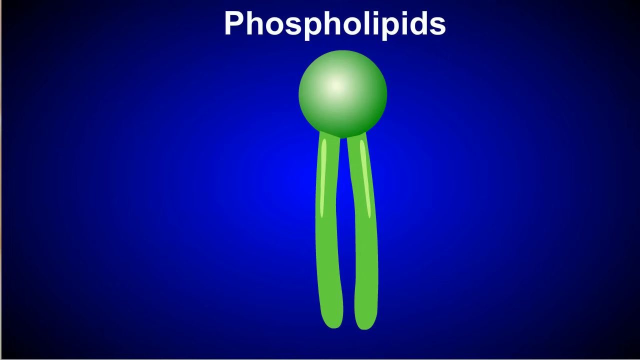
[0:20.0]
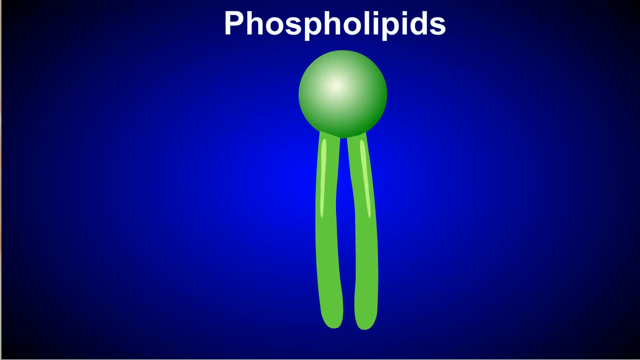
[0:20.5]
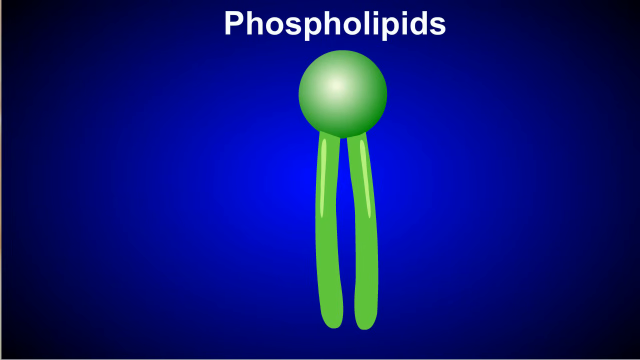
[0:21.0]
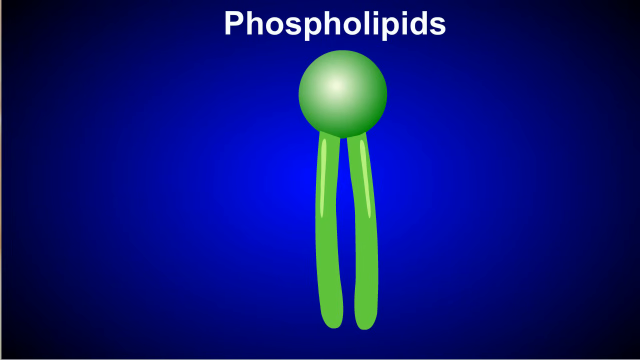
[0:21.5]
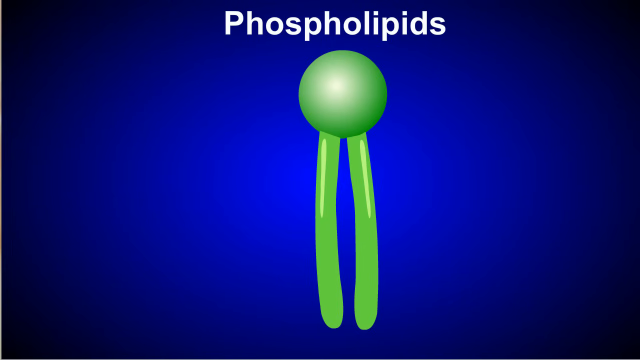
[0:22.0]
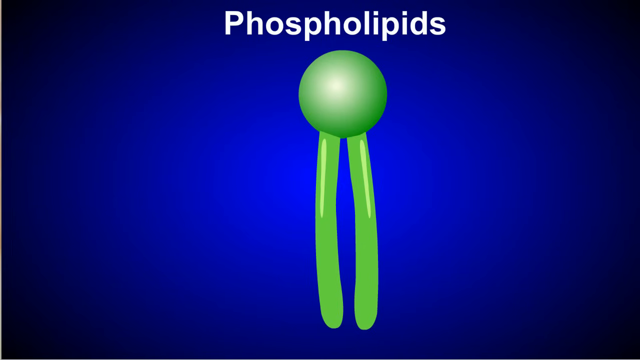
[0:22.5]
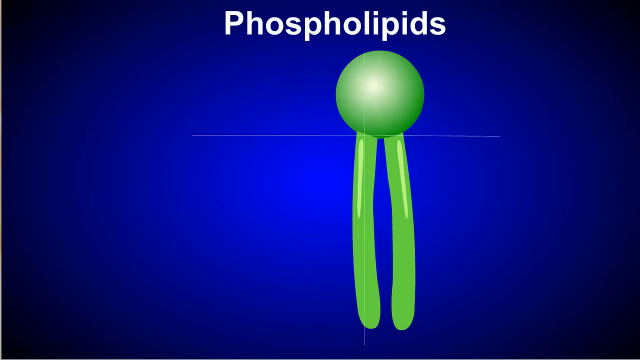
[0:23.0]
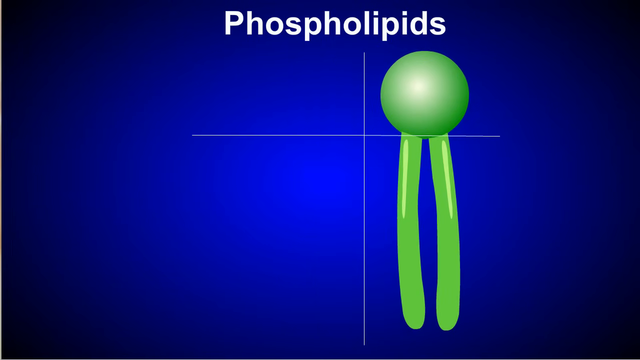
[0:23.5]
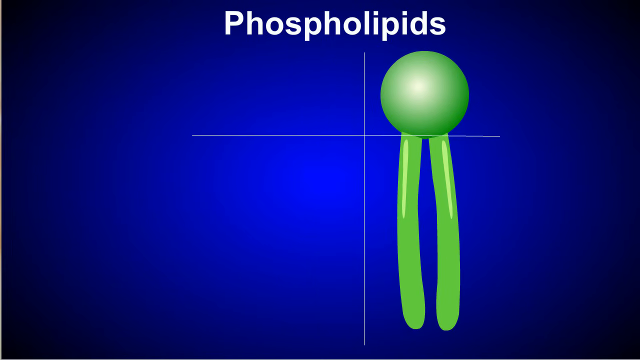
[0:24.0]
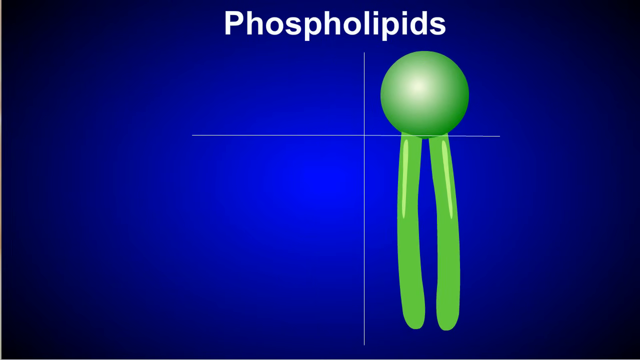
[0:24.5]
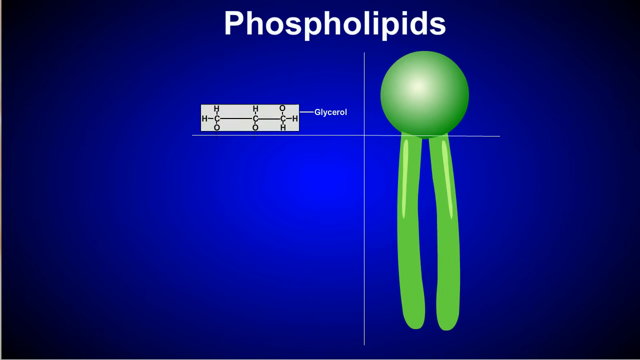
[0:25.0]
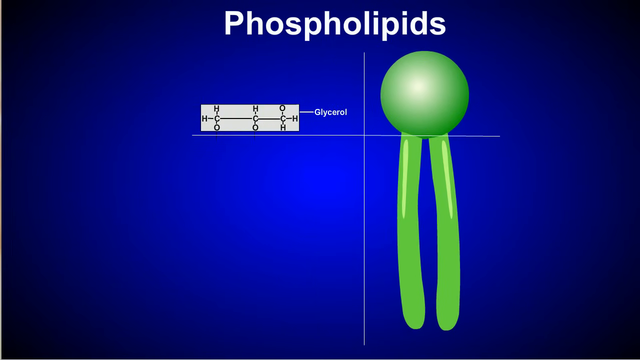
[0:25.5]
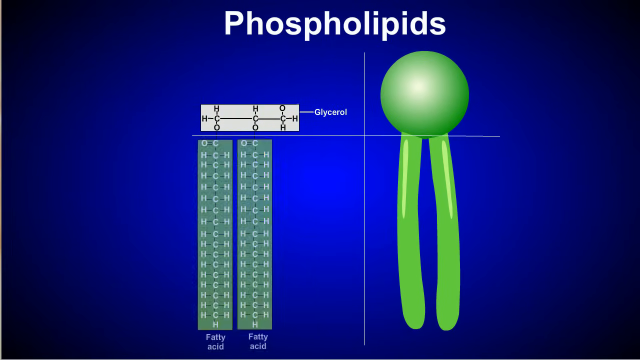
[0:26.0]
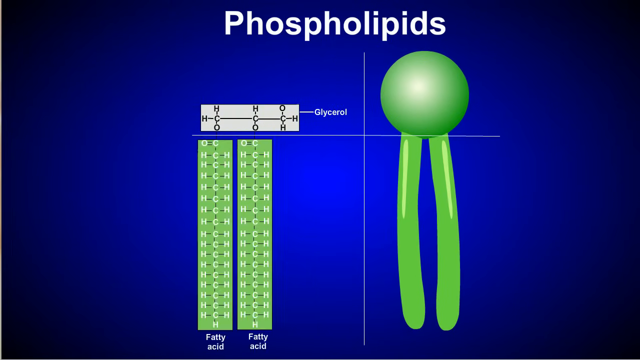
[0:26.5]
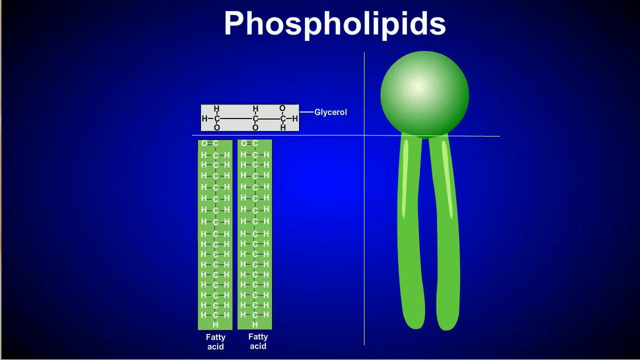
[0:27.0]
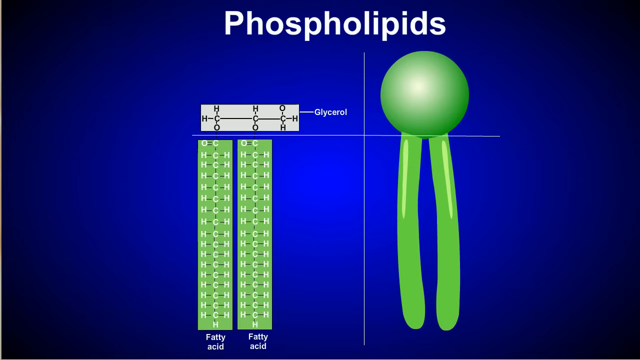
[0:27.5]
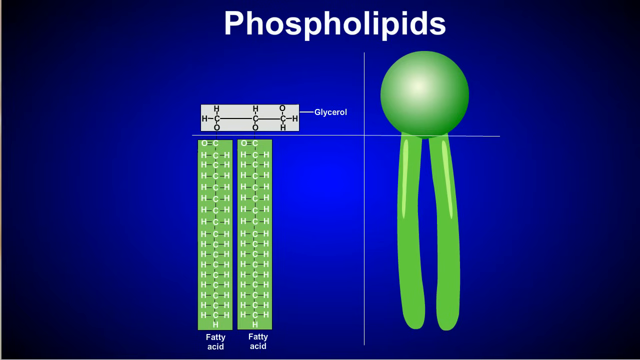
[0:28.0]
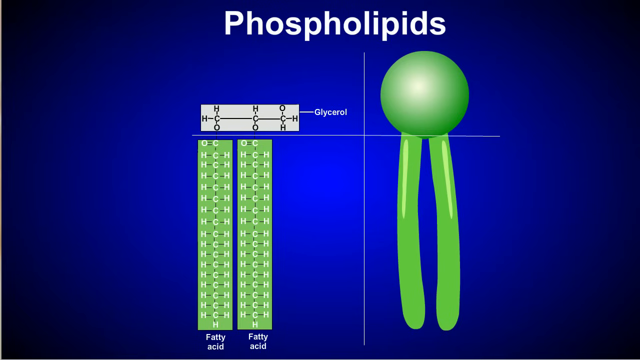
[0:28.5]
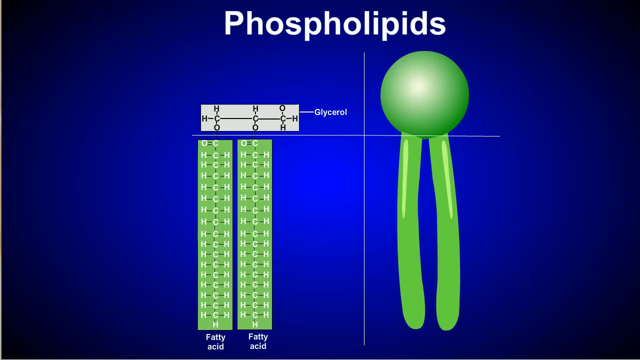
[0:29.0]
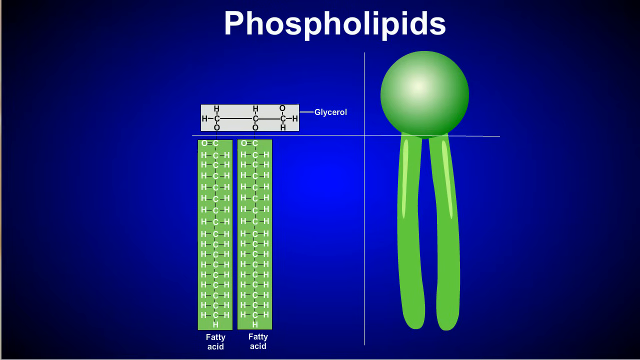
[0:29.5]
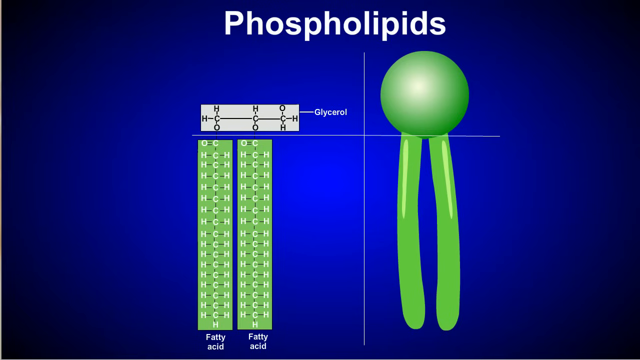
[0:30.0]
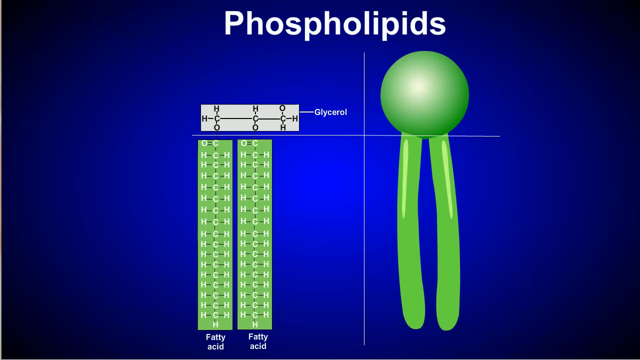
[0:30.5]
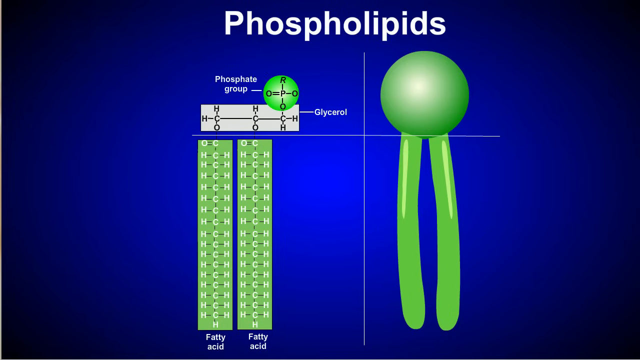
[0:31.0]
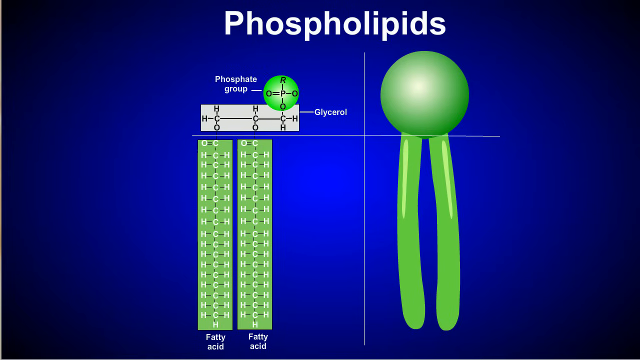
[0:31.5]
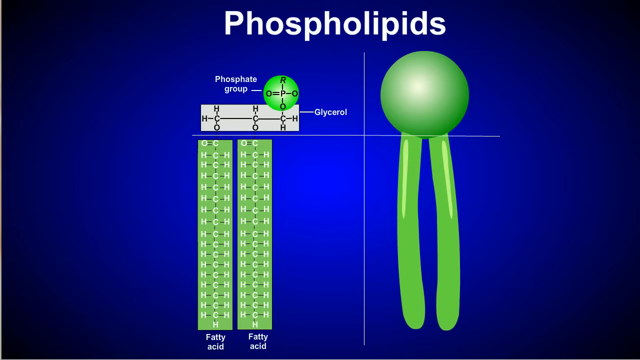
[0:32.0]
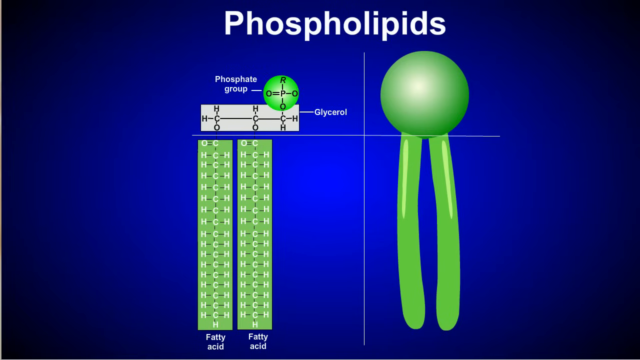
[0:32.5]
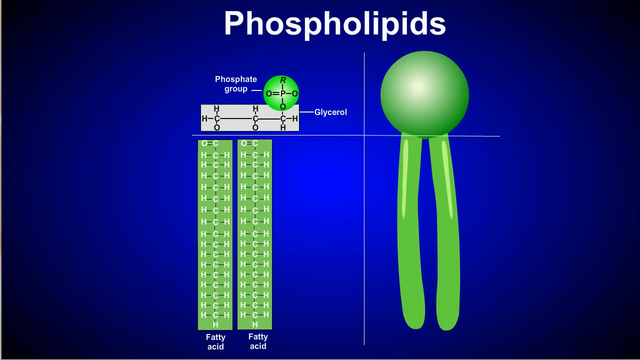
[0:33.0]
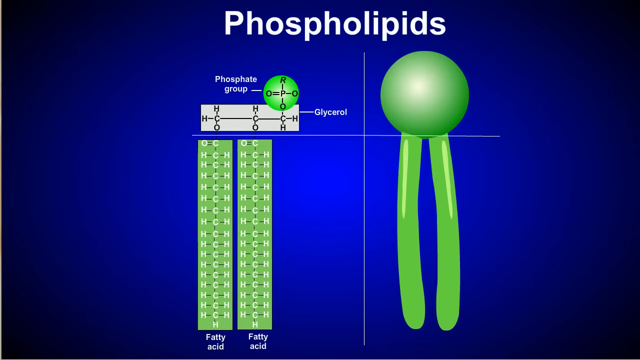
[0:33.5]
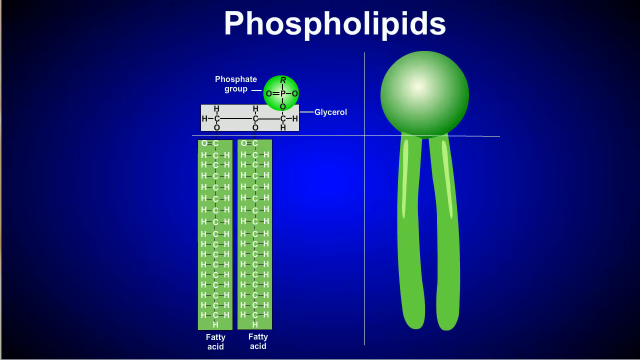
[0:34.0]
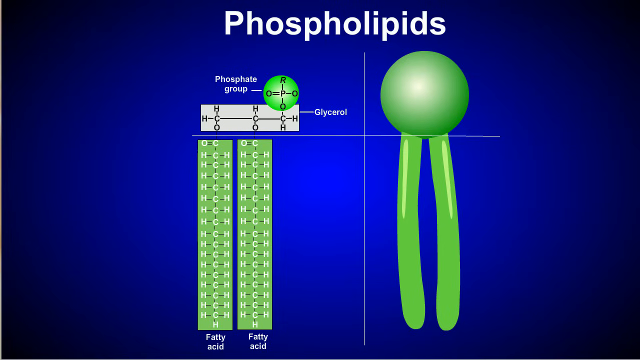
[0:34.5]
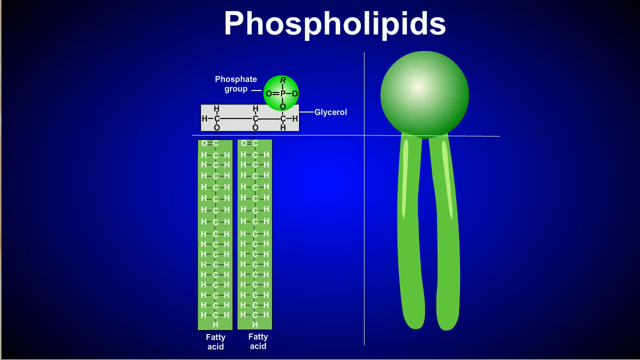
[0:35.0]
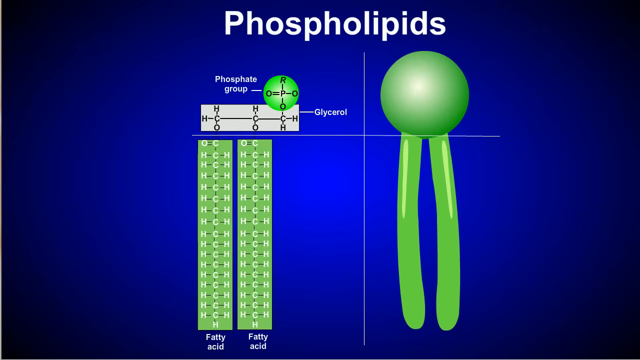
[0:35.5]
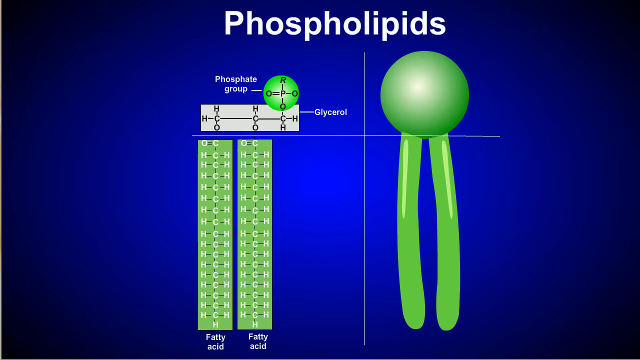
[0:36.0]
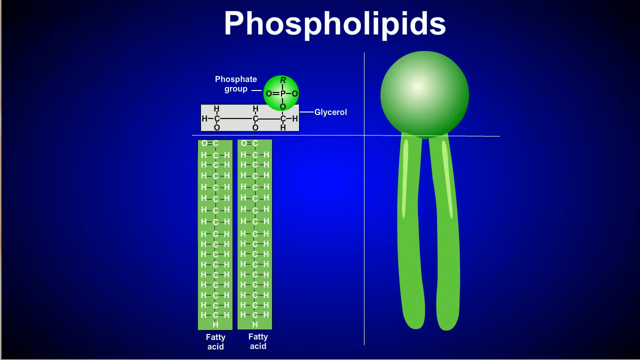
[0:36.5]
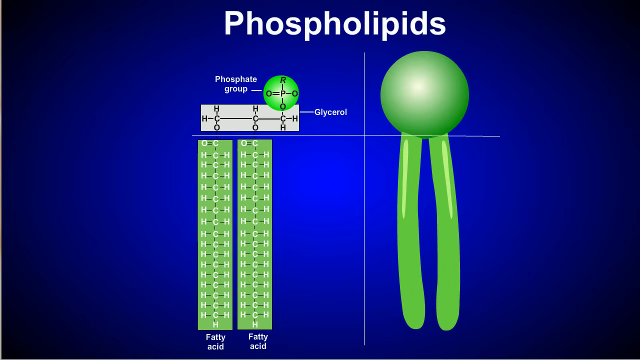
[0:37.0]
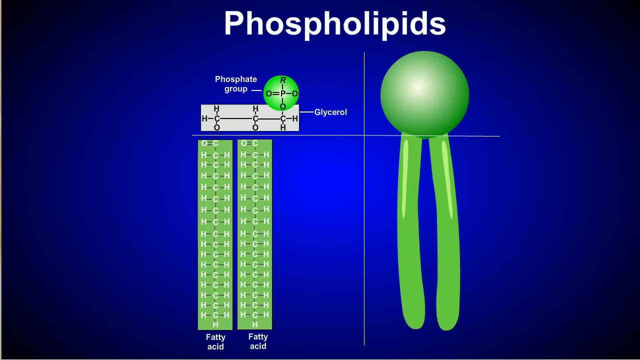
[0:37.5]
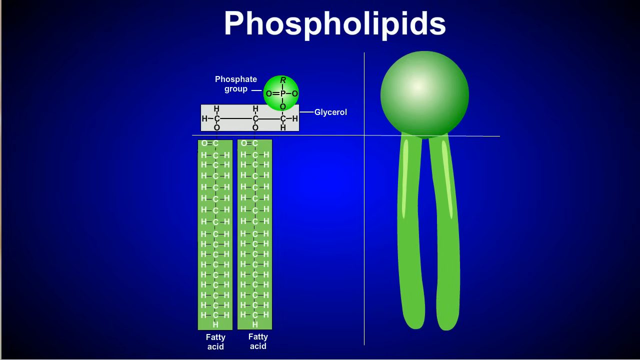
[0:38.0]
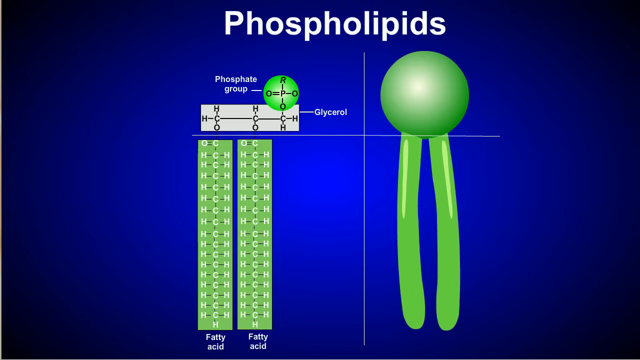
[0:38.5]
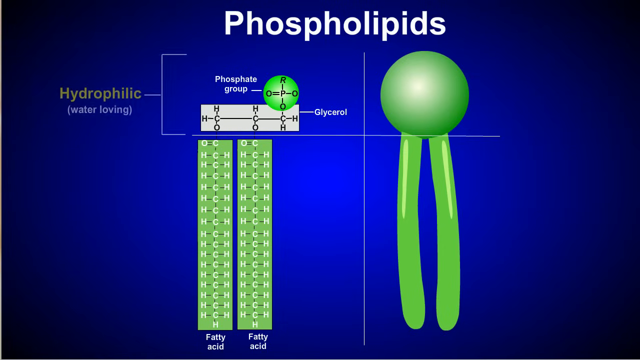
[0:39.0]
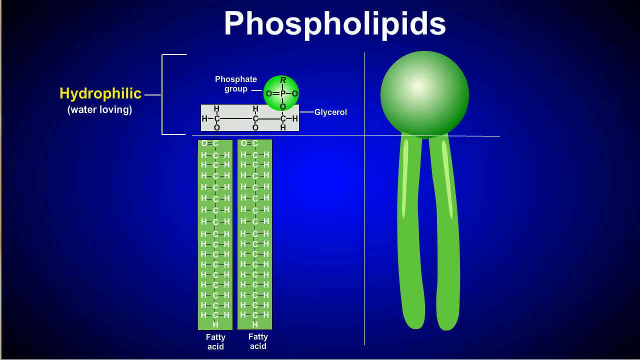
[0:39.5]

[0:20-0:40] On a blue background, white lettering at the top reads "phospholipids." Just below it is a green circle with two long green tubes hanging below. A white cross appears in the center, along with white lettering that says "glycerol." A white box on the left contains black lettering: H-C-O going downwards in two rows, a third row reading O-C-H, and an H with a line through the middle at the far right and far left. Two green squares are each labeled "fatty acid" in white; inside, they read O=C, then H-C-H below that, with an H at the very bottom of both boxes. White lettering then appears above, saying "phosphate group," beside a green circle with the letters R-P-O and, going across, O=P-O.